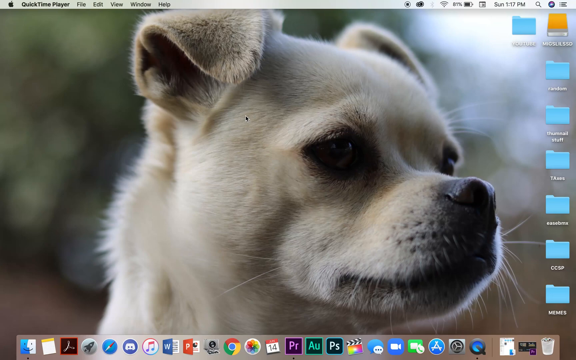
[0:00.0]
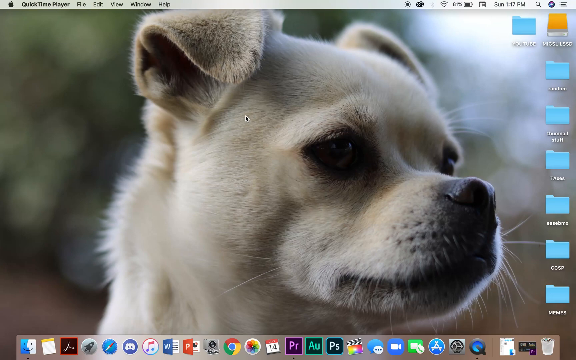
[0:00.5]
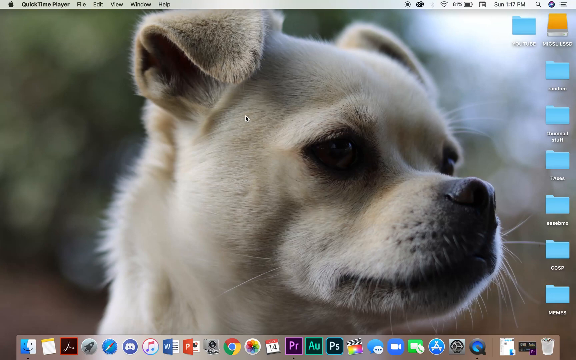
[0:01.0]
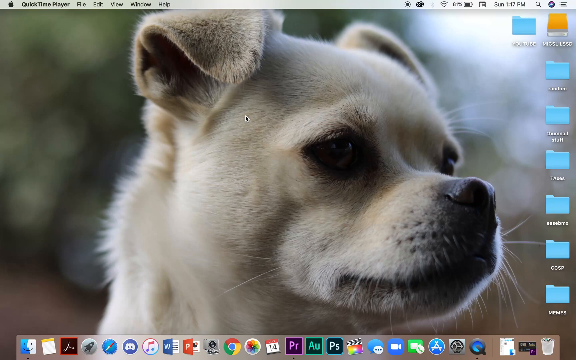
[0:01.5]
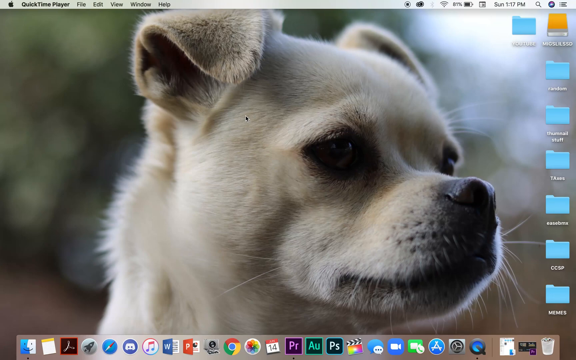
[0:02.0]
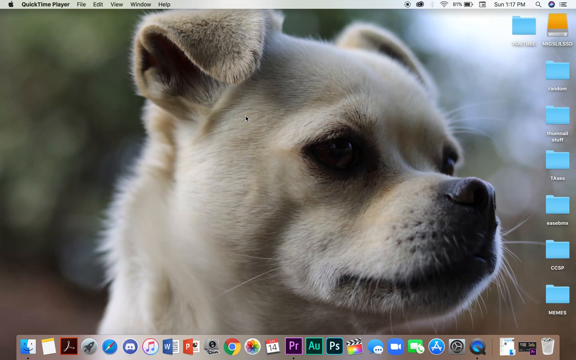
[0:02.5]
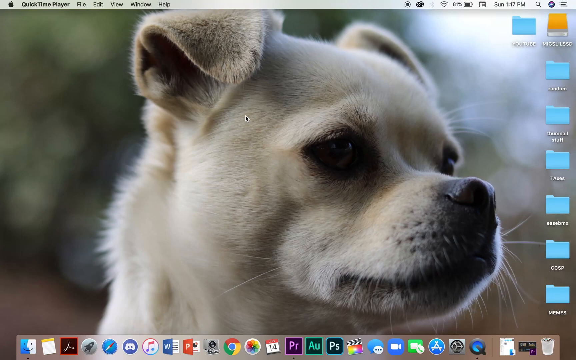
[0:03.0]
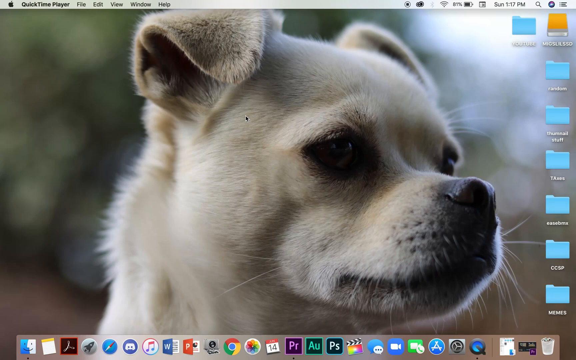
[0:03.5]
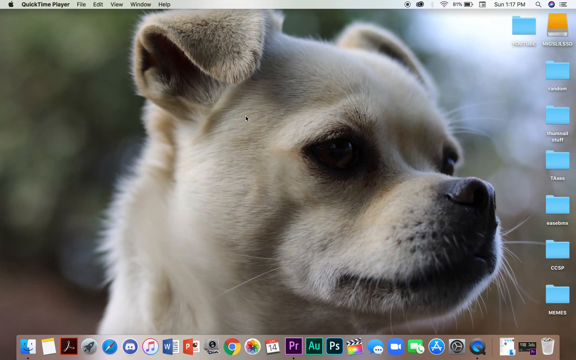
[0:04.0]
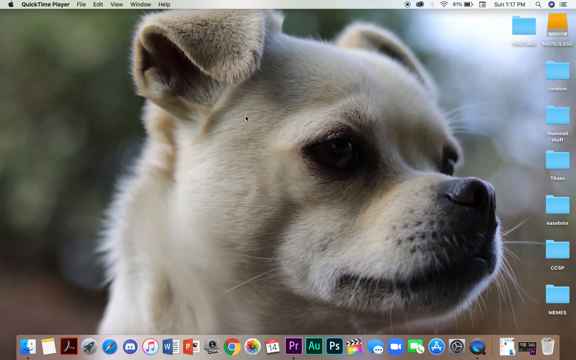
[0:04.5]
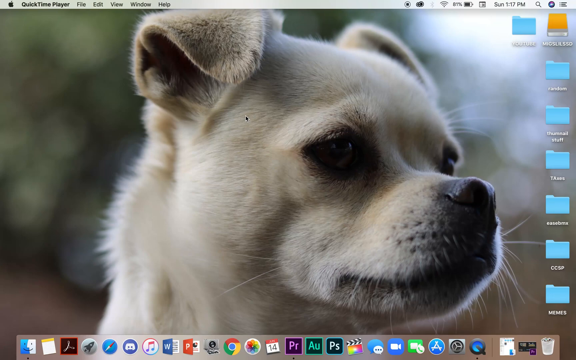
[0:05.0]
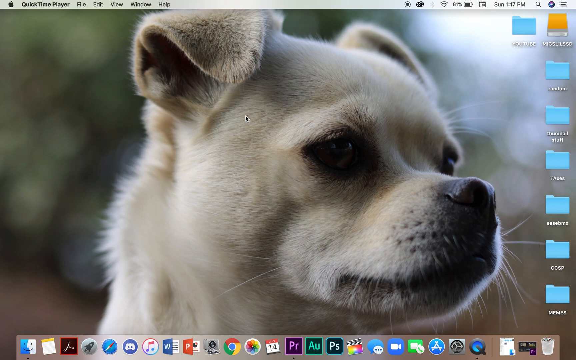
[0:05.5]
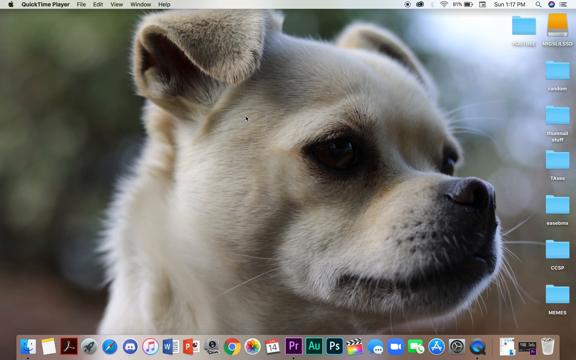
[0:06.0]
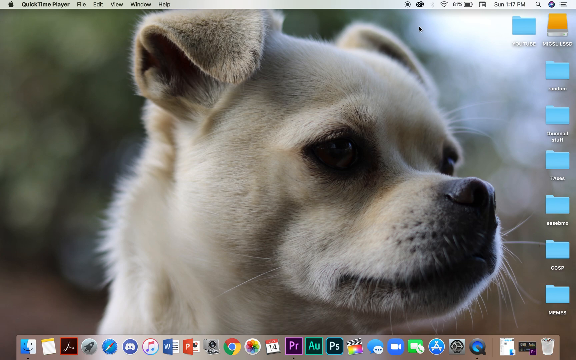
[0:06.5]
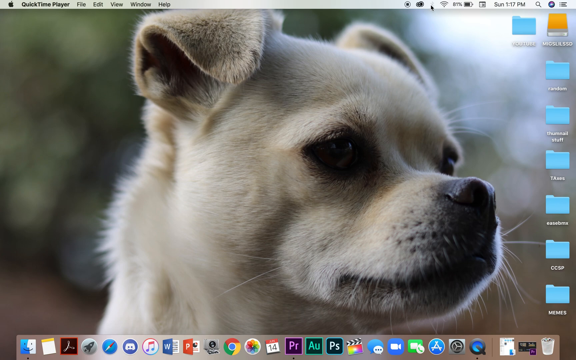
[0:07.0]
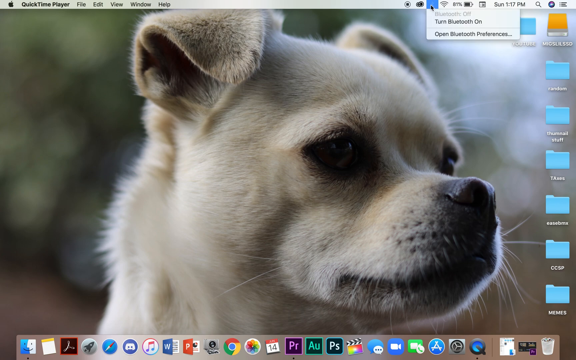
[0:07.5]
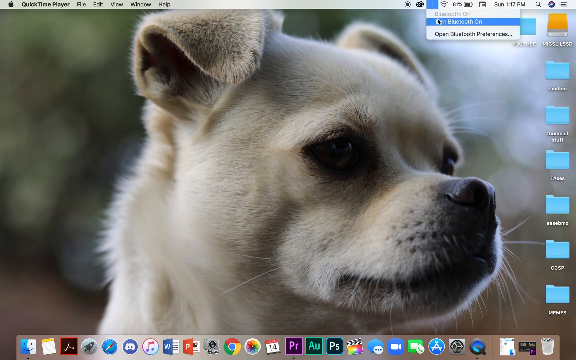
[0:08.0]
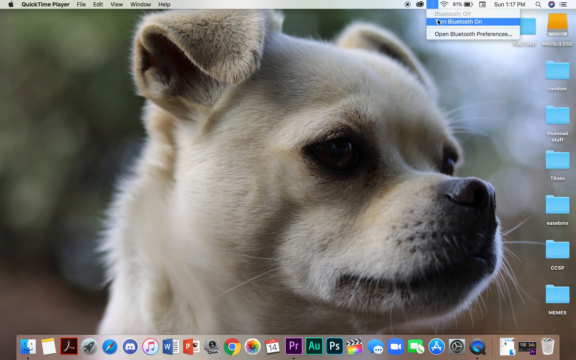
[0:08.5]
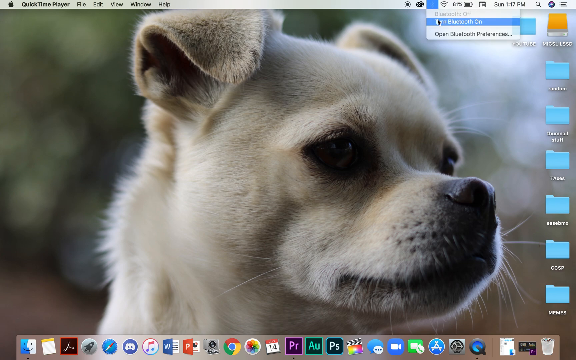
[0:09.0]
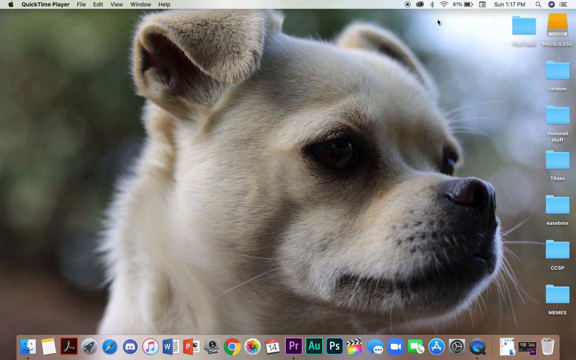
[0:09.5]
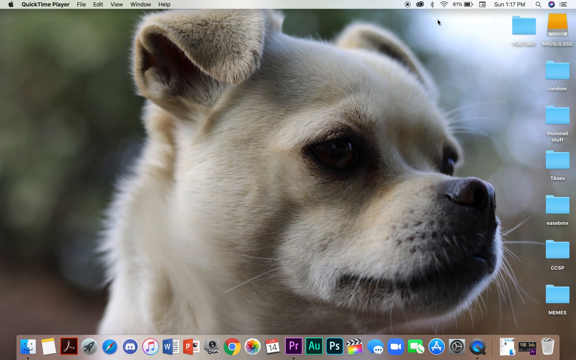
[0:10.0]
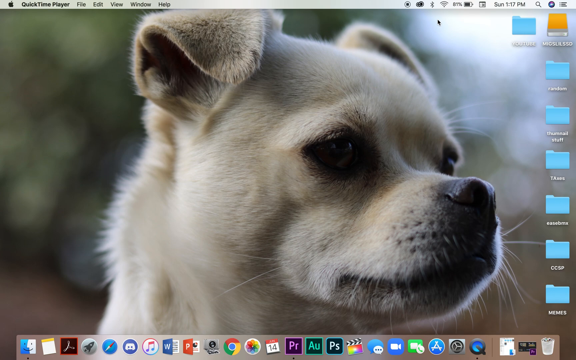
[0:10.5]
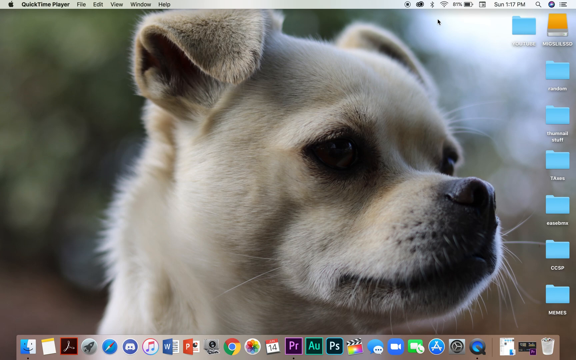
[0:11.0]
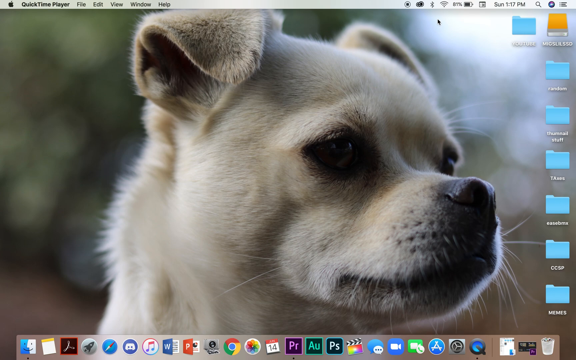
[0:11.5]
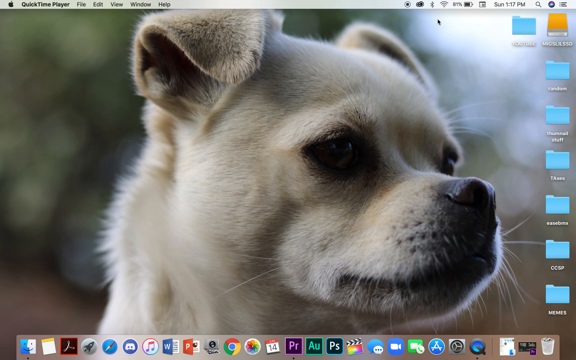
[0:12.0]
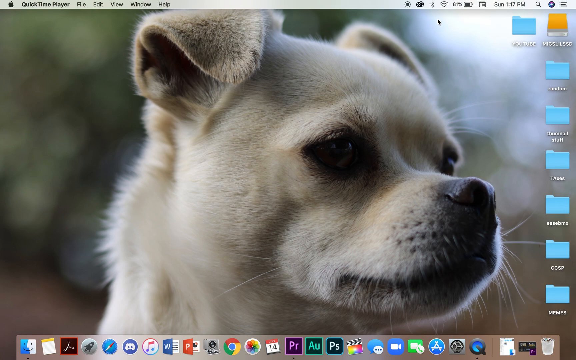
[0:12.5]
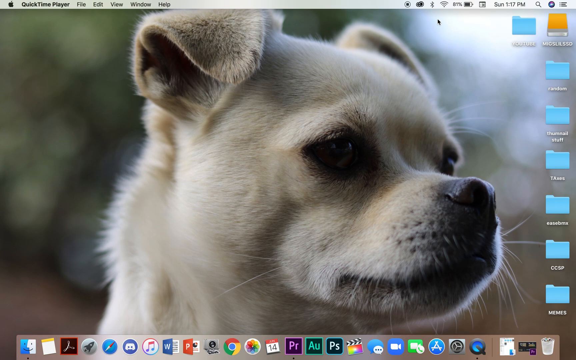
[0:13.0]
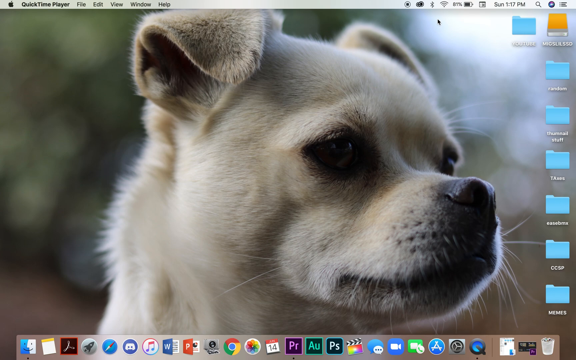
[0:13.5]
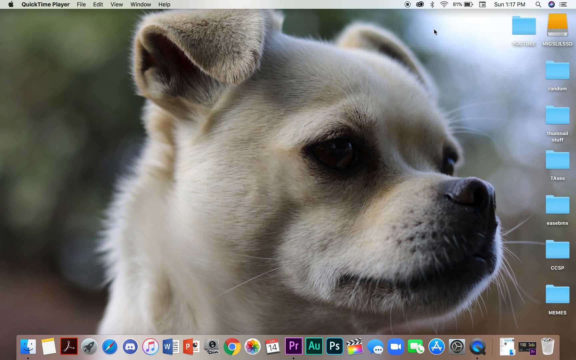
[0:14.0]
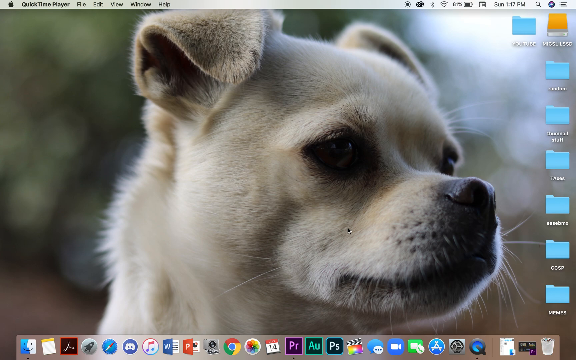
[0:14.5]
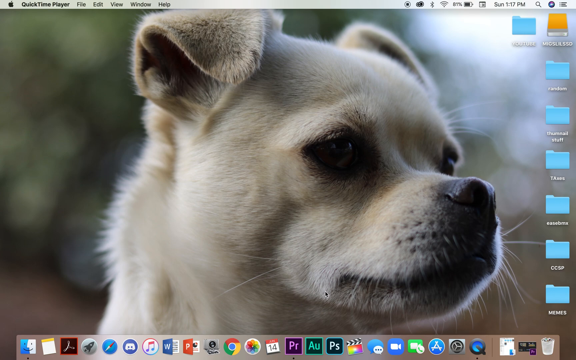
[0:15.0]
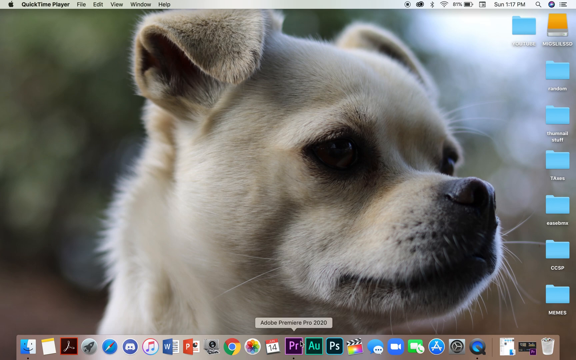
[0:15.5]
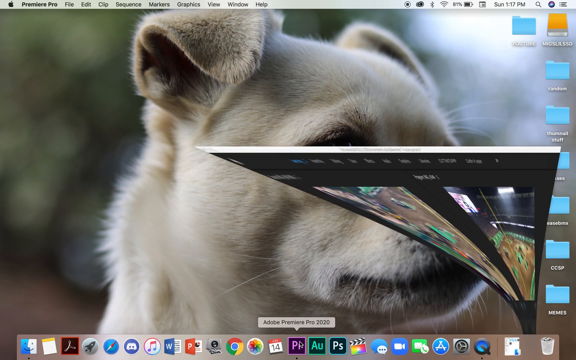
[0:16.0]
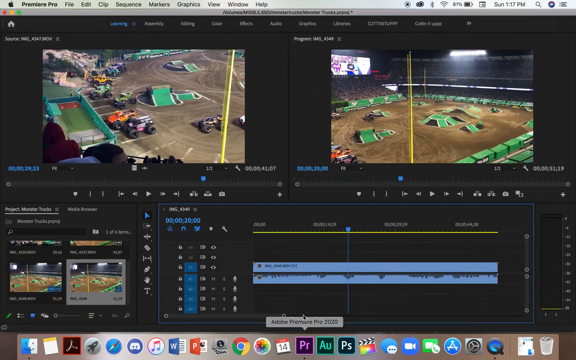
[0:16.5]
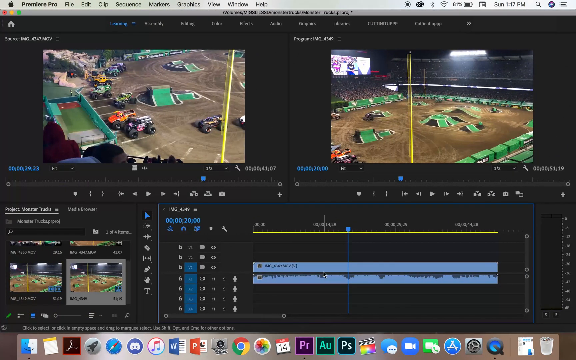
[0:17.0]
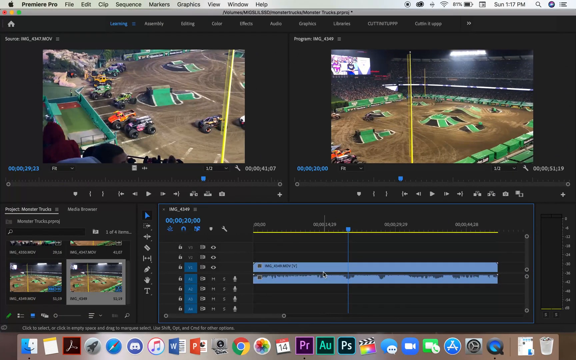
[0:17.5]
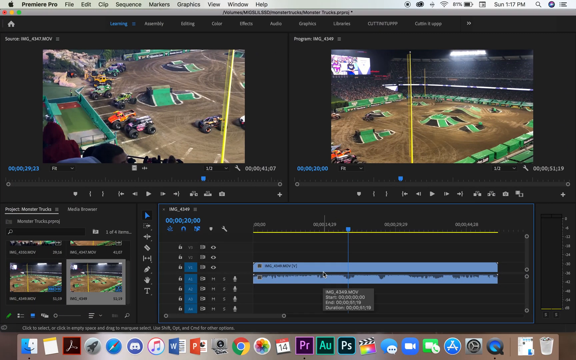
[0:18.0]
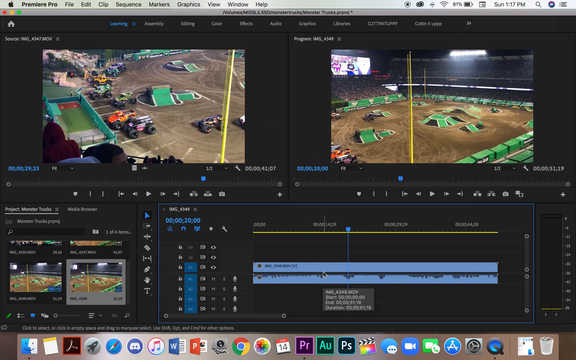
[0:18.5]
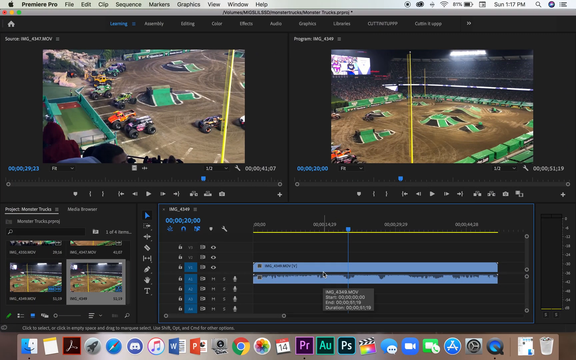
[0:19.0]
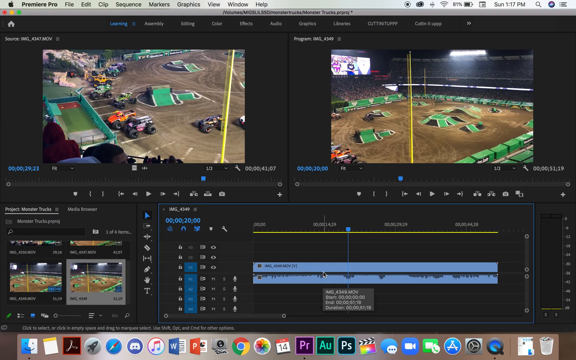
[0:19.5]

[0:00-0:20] The screen shows white, brown, and black. A Wi-Fi connection is active on the computer, and there seems to be a video game on screen. Two separate pictures show the same thing. The toolbar at the bottom of the computer has many icons, including icons for pictures and music, and there are also files on the screen. The clock shows Sunday, 1:17 in the afternoon. QuickTime Player is open, with the menu items File, Edit, View, Window, and Help. The Bluetooth icon is in the top right corner next to the Wi-Fi and battery icons.